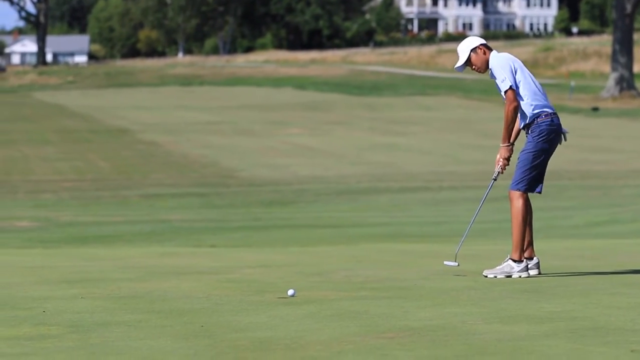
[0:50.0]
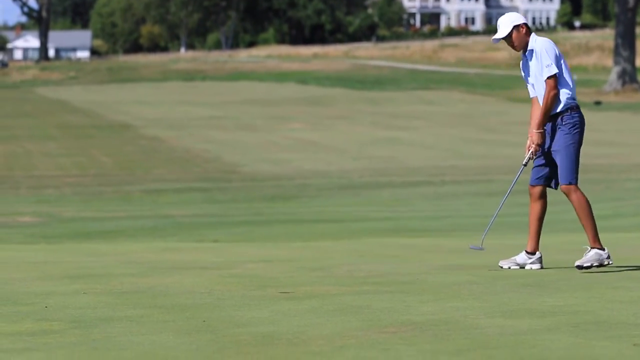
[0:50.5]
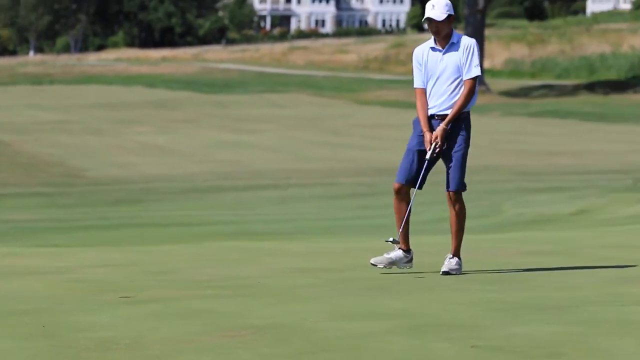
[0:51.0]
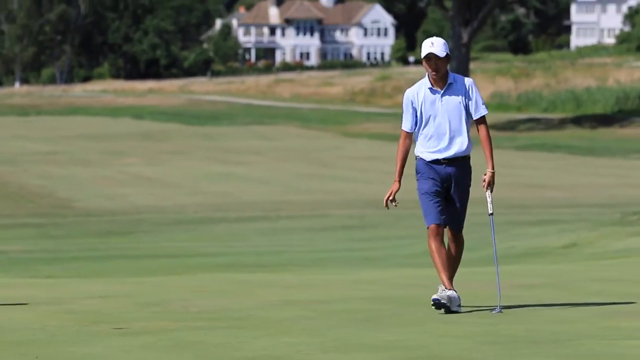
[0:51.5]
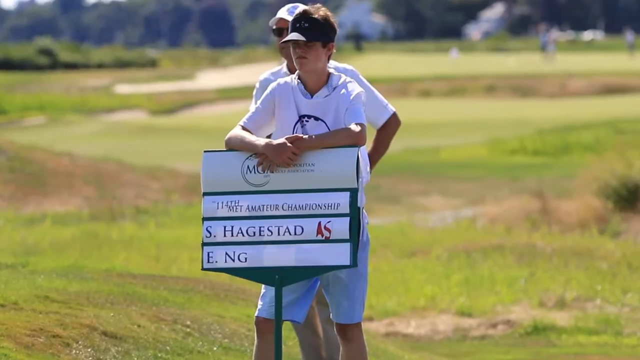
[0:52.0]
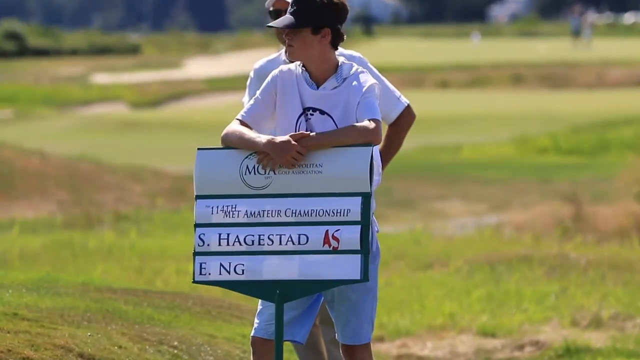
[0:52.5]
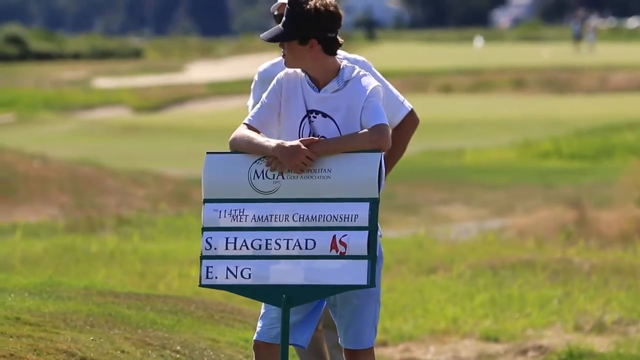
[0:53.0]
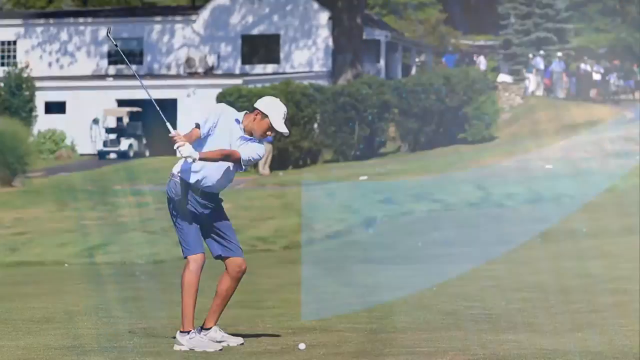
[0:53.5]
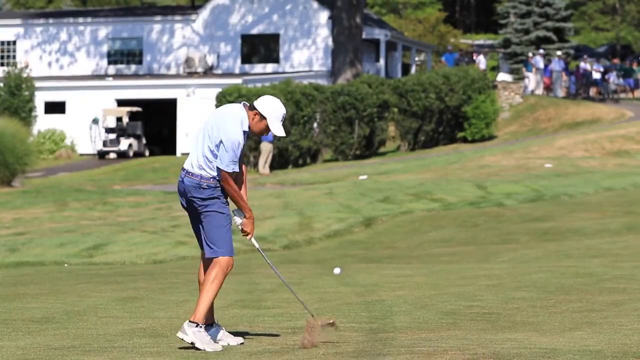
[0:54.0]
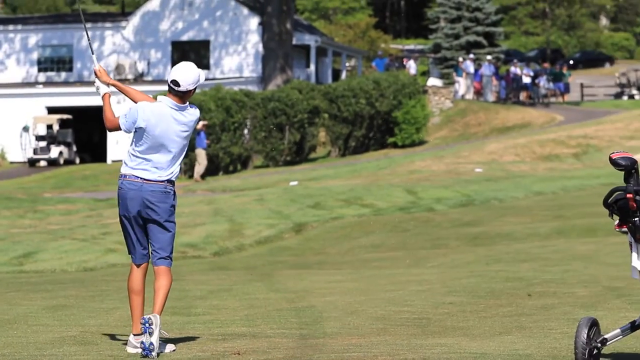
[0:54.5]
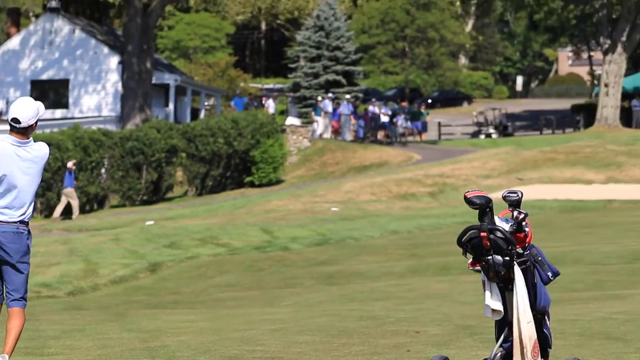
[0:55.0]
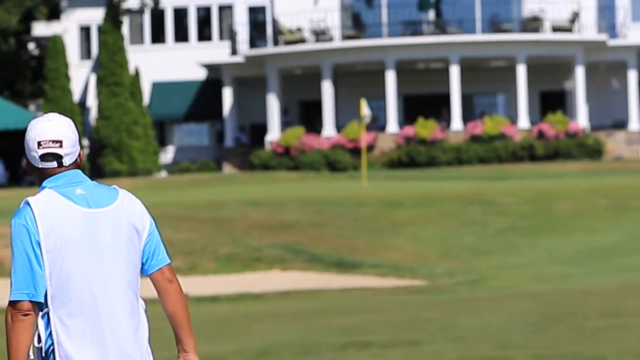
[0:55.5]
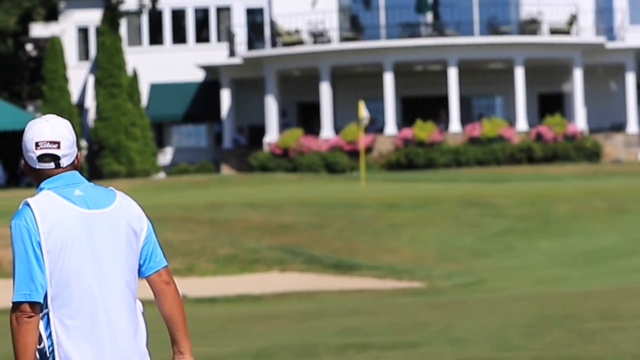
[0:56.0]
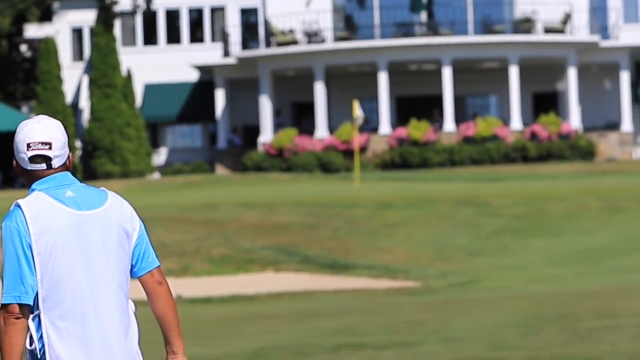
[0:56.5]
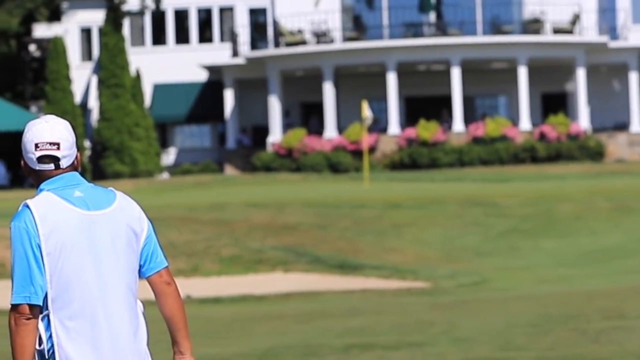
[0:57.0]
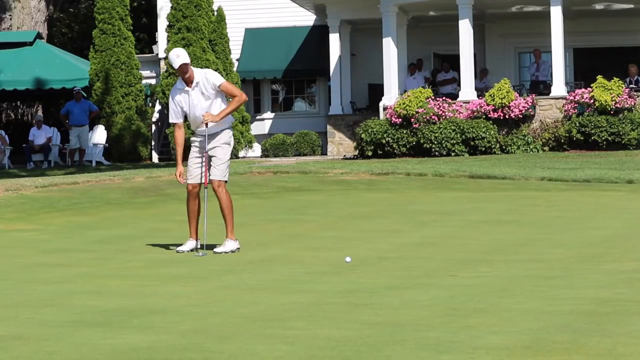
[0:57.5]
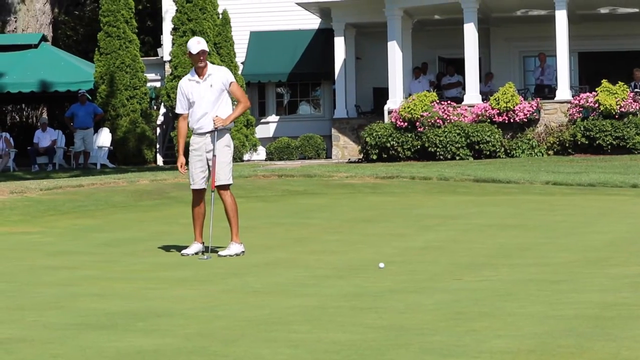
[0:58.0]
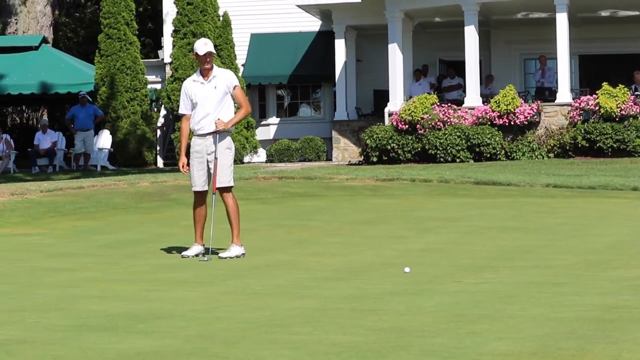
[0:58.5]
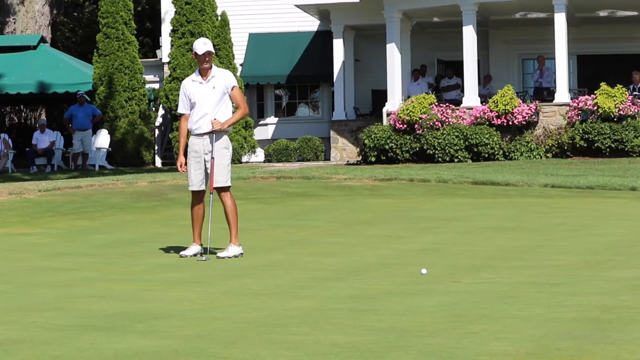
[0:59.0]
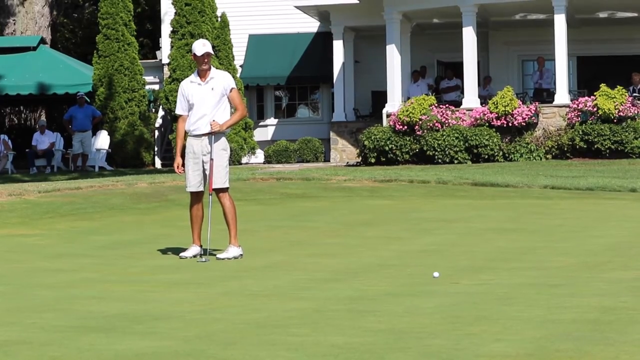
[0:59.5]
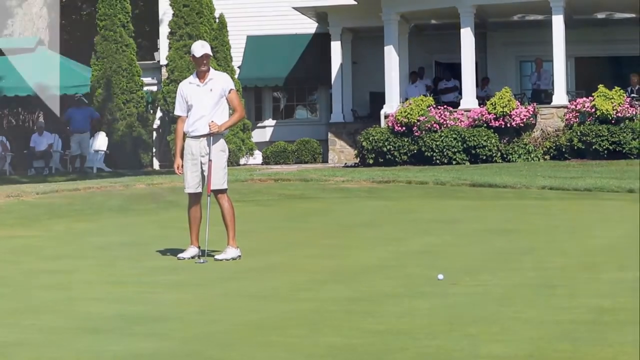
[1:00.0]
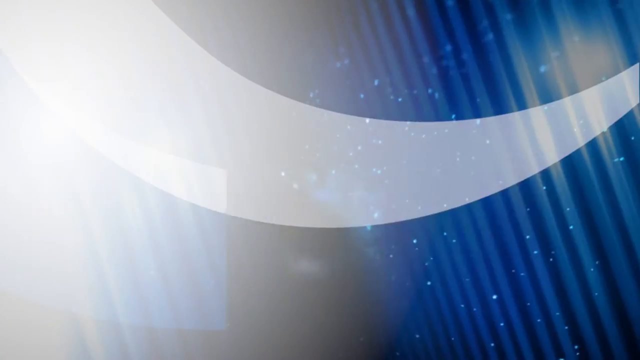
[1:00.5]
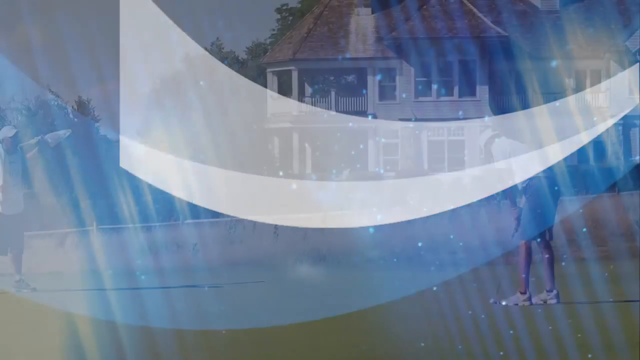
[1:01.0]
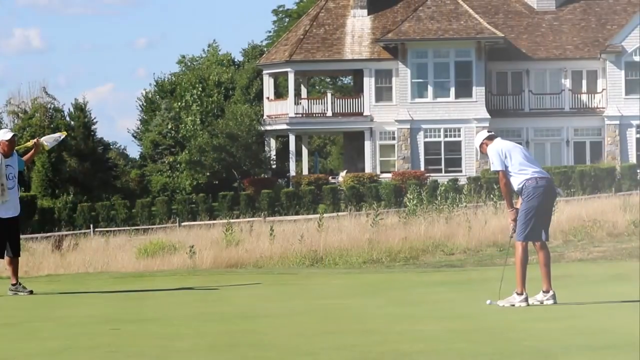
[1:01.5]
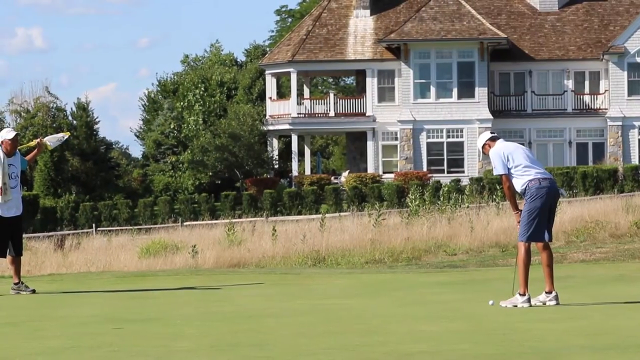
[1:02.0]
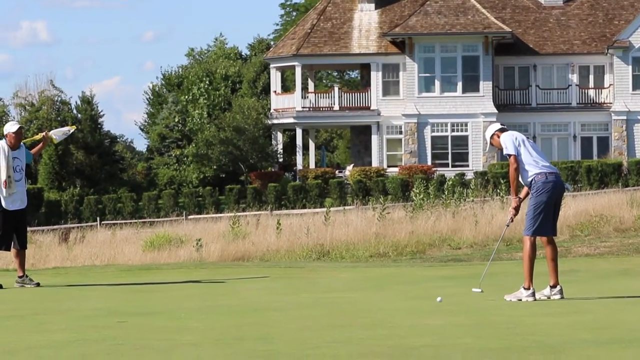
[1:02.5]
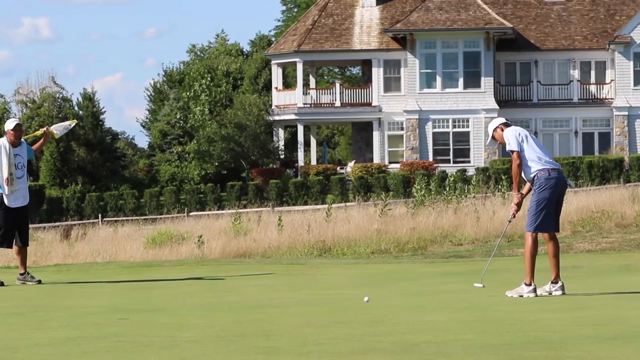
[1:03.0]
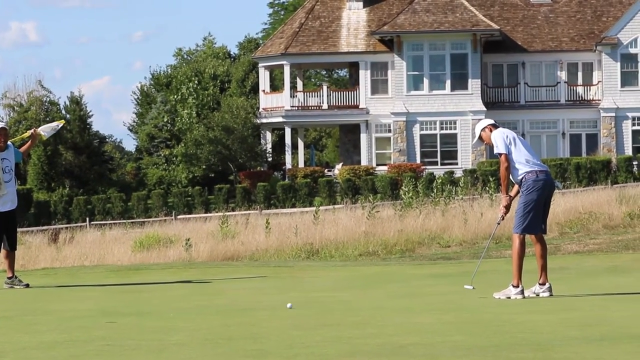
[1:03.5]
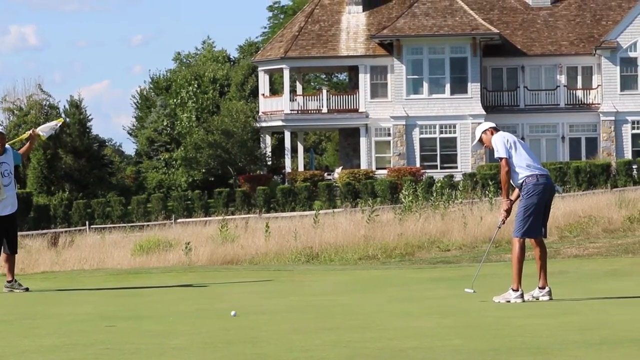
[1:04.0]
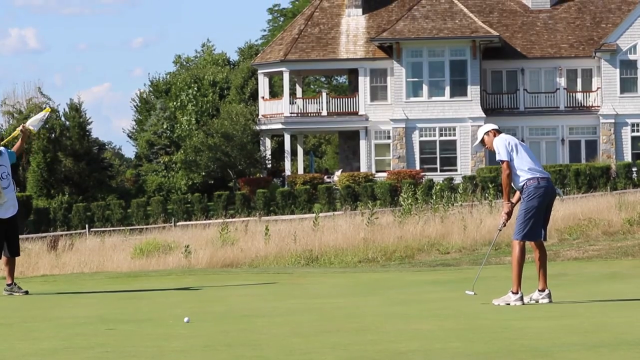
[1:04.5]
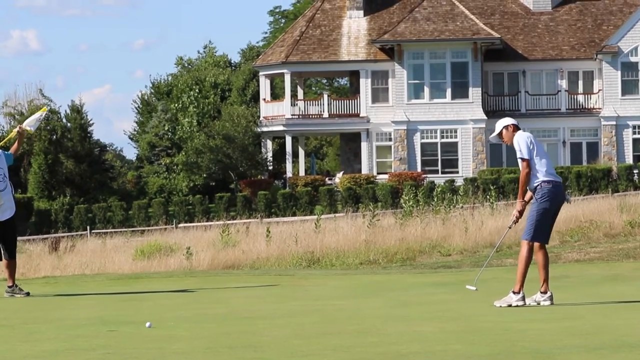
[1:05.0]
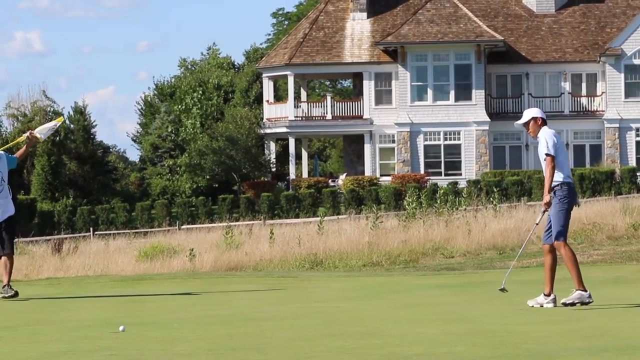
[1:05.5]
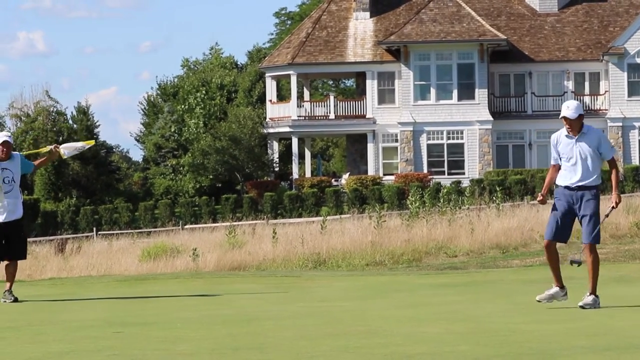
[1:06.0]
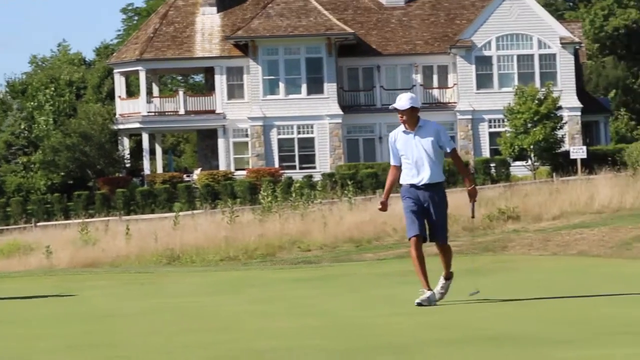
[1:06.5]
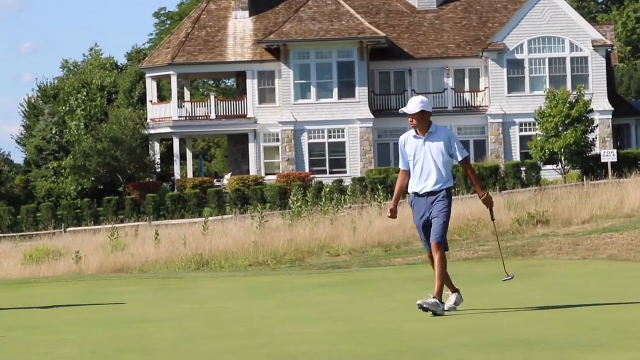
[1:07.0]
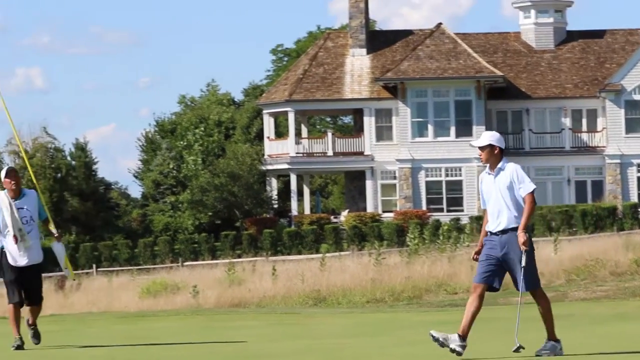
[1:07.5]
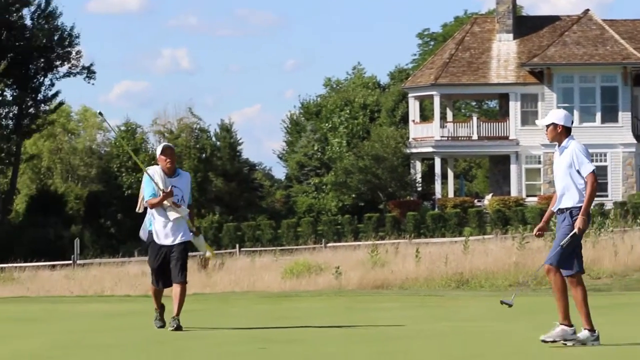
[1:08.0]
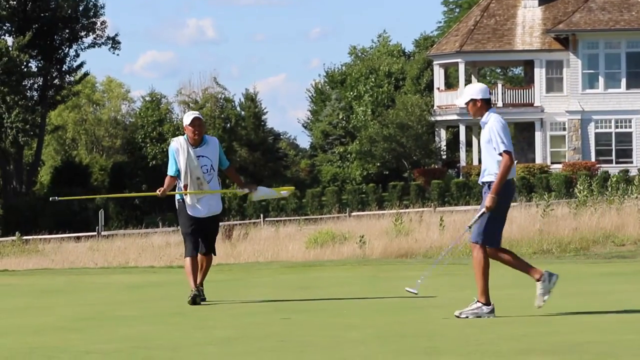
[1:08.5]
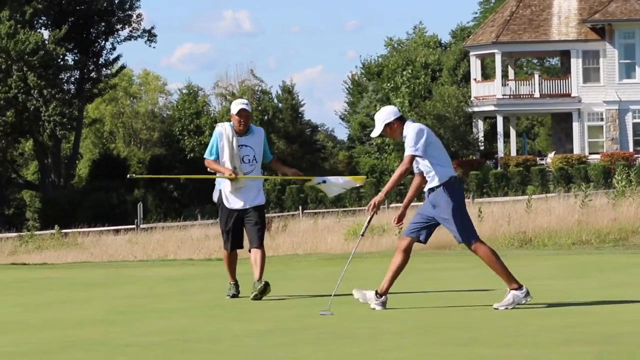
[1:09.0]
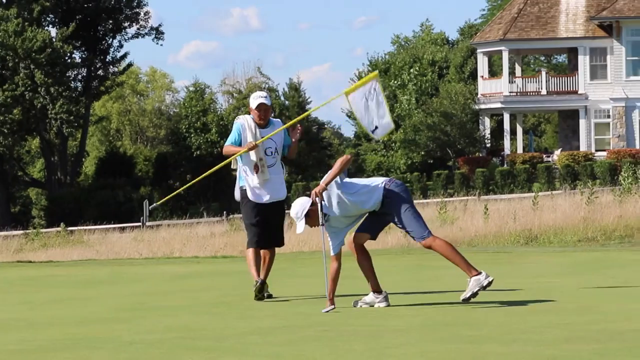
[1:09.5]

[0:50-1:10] The golfer's putt goes in the hole and he walks away. An image shows a younger man holding a sign with "S. Haigstad" and "E. N. G." on it. A graphic transition leads to the same man hitting a longer shot that goes near the flag and hole, though it is not shown going in. Another golfer is on a putting green with a white building in the background, some people watching, and flowers and bushes in the background; he does not make his putt. Another graphic transition leads to the golfer in blue shorts making a more difficult putt. He gets it in and celebrates with a fist bump, looking quite happy, and the flag worker puts the flag back in the hole.